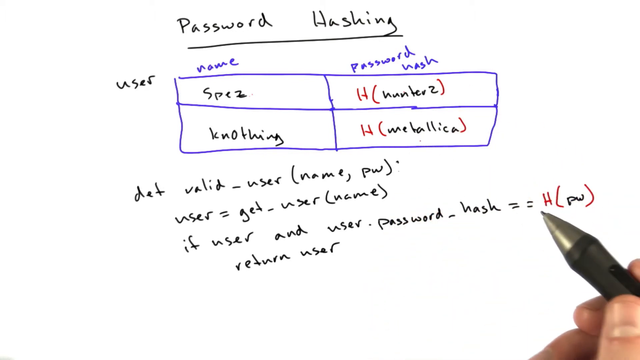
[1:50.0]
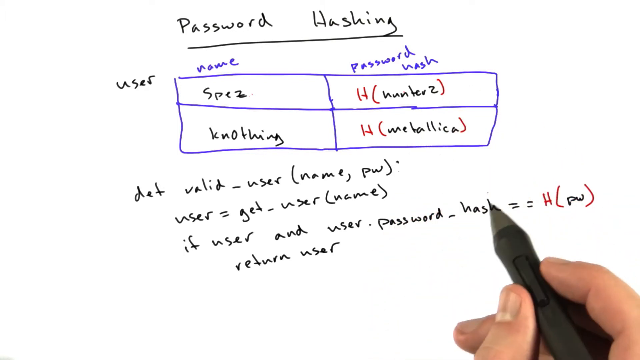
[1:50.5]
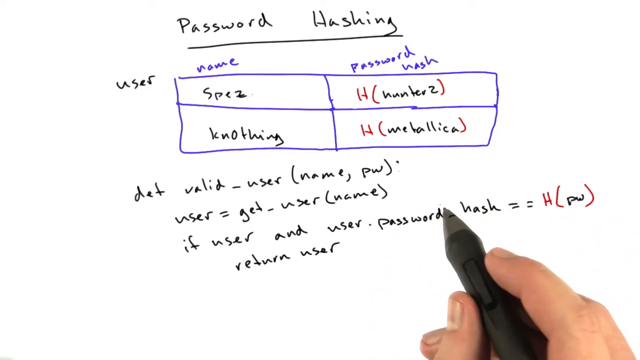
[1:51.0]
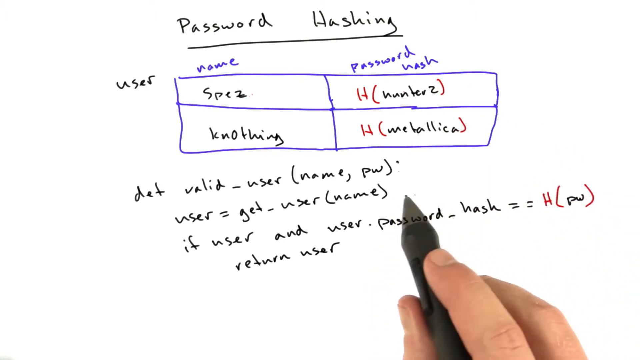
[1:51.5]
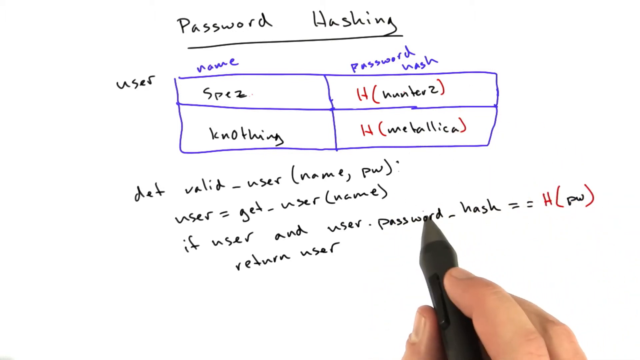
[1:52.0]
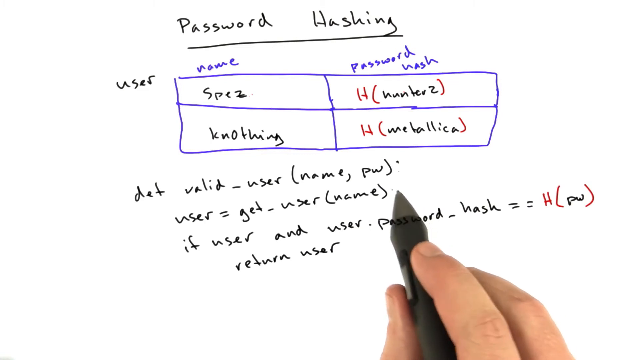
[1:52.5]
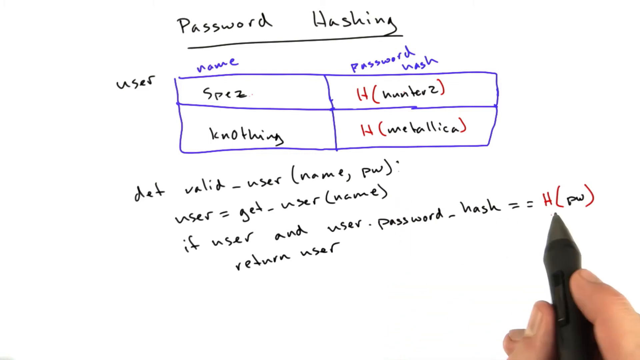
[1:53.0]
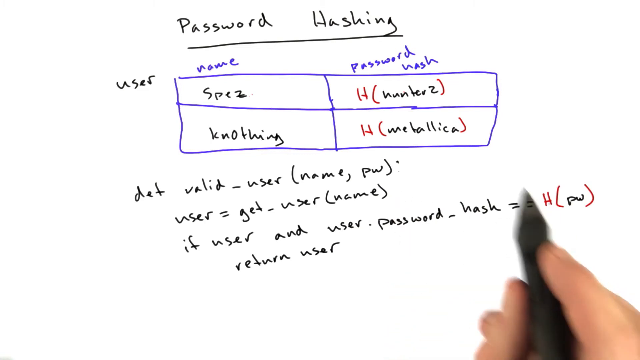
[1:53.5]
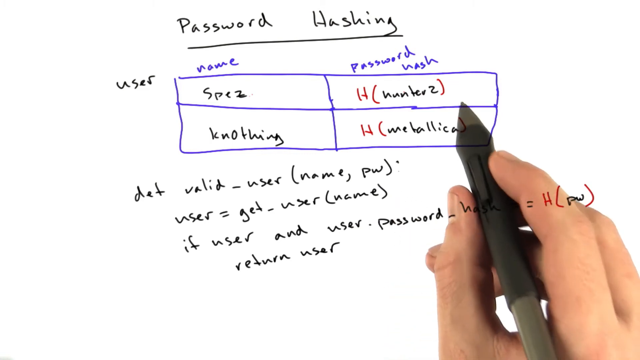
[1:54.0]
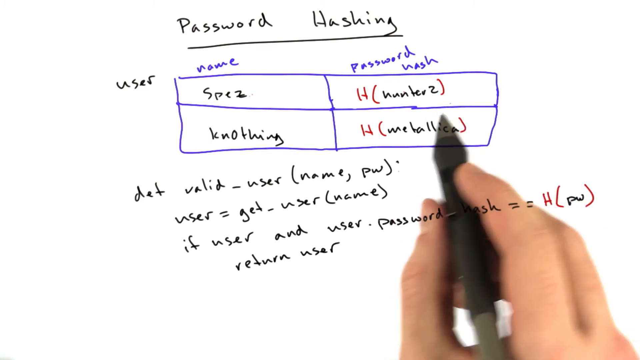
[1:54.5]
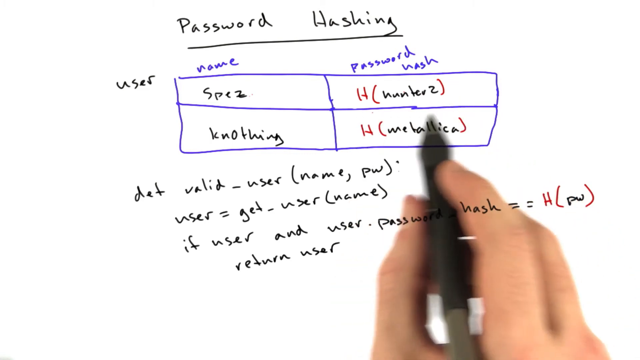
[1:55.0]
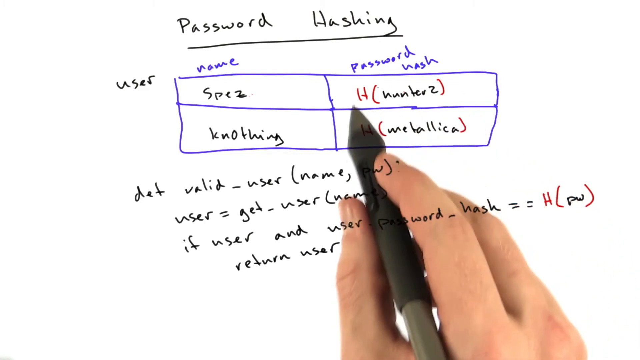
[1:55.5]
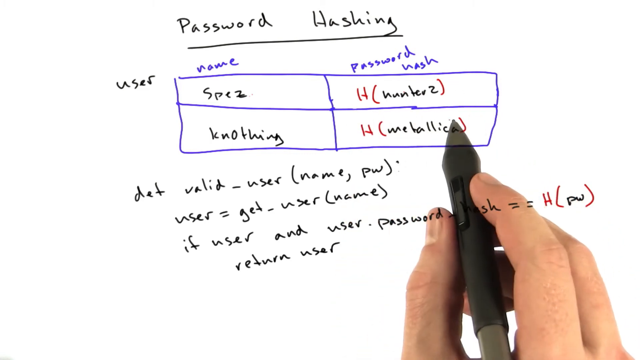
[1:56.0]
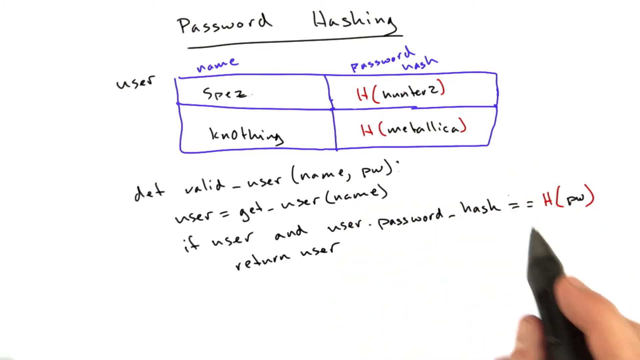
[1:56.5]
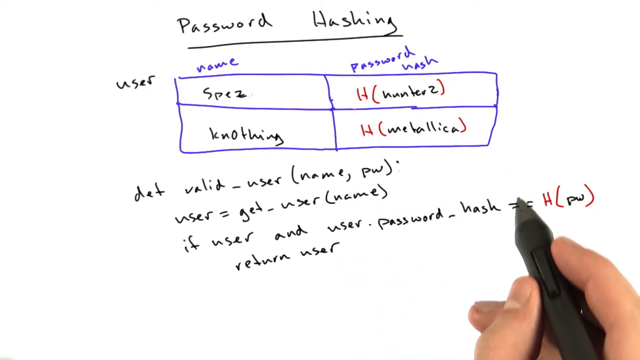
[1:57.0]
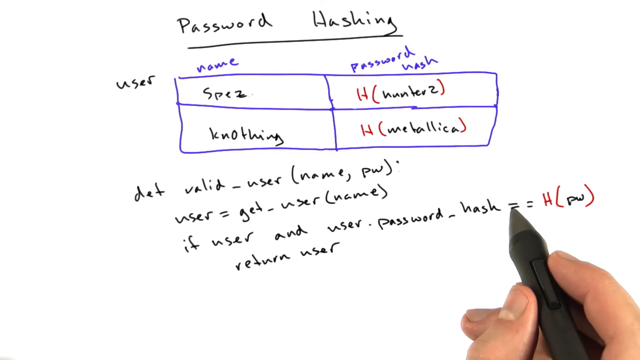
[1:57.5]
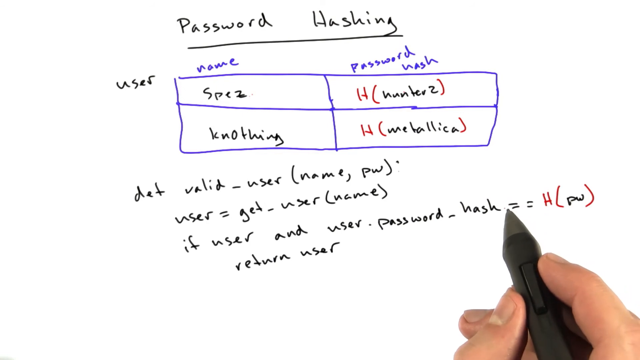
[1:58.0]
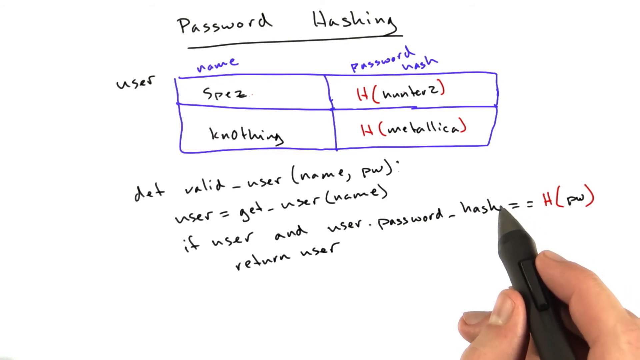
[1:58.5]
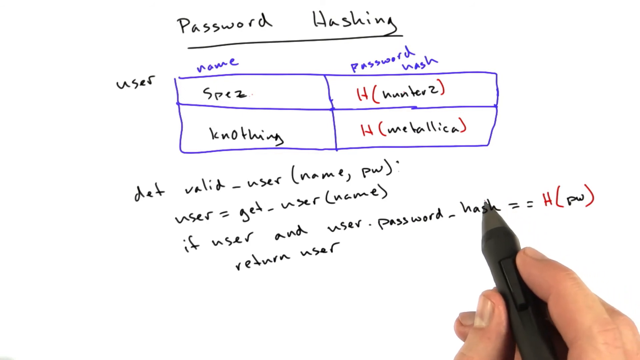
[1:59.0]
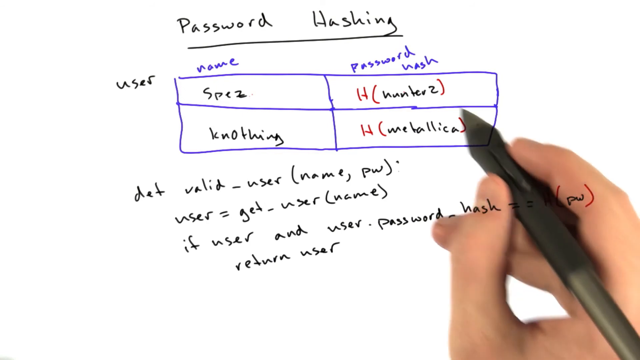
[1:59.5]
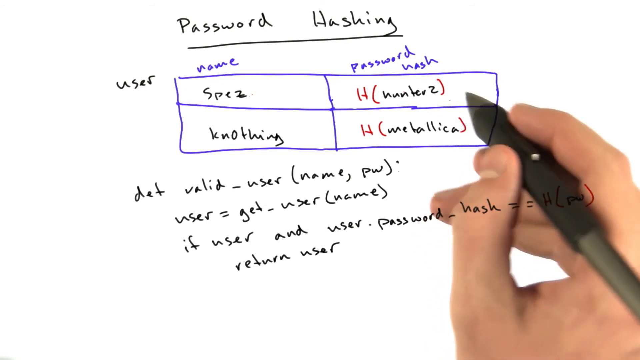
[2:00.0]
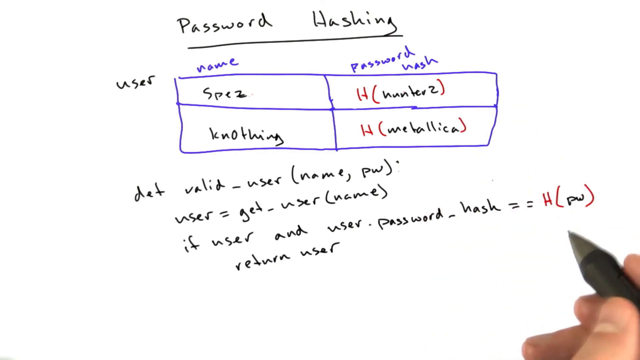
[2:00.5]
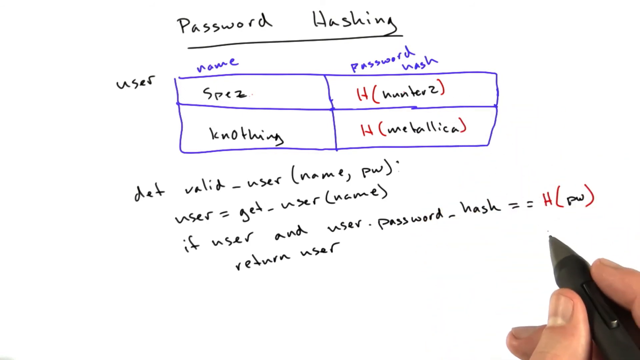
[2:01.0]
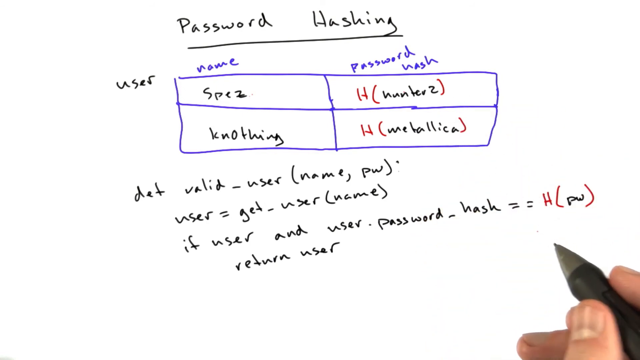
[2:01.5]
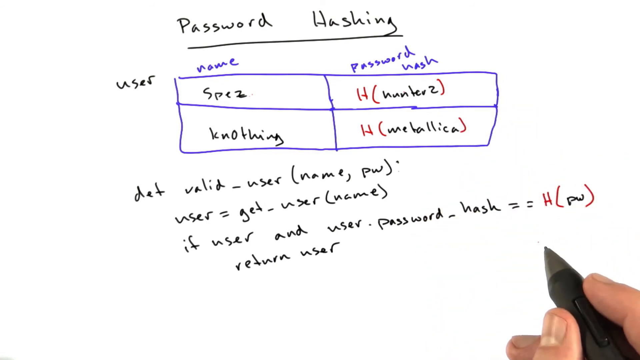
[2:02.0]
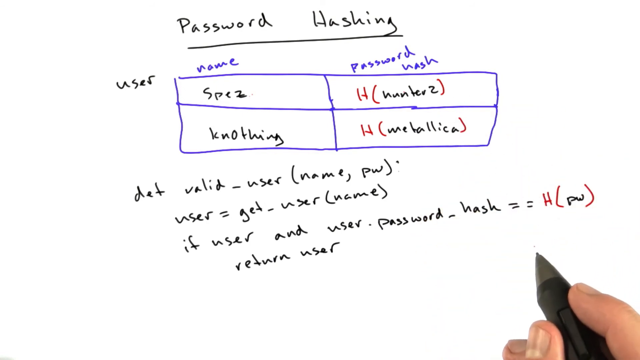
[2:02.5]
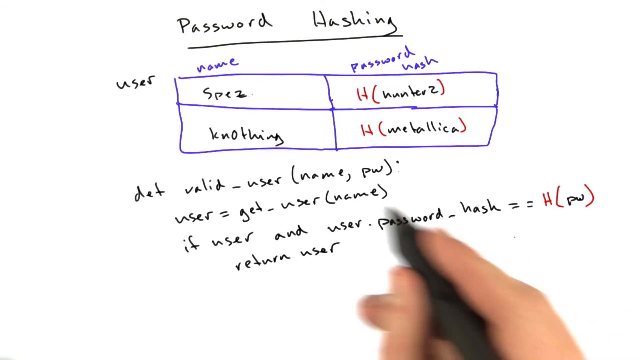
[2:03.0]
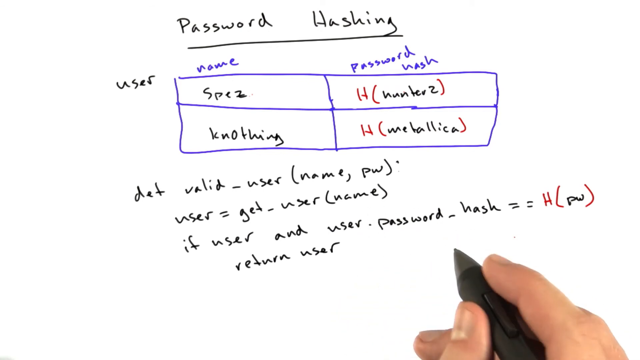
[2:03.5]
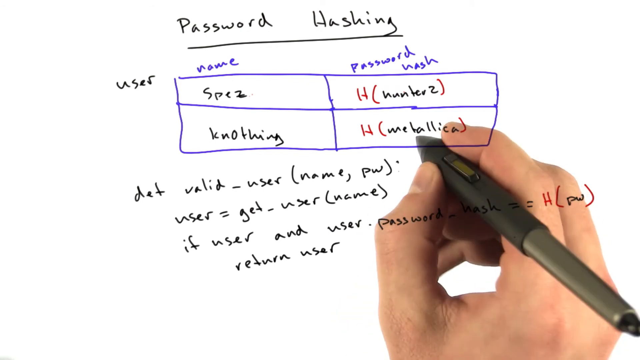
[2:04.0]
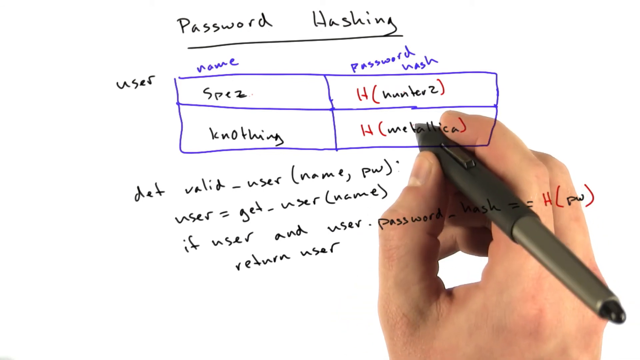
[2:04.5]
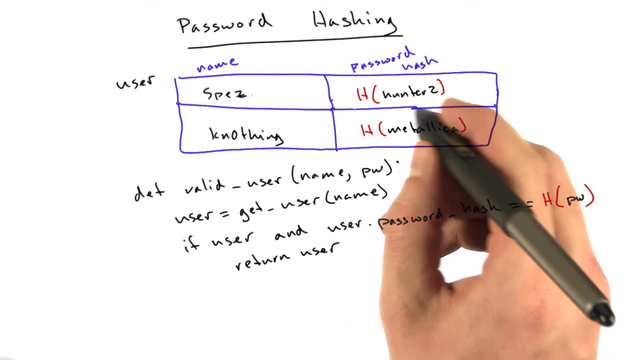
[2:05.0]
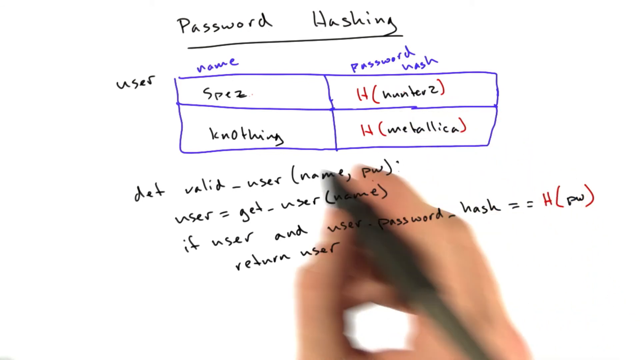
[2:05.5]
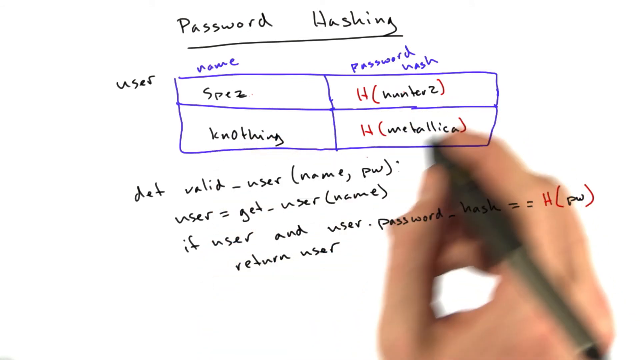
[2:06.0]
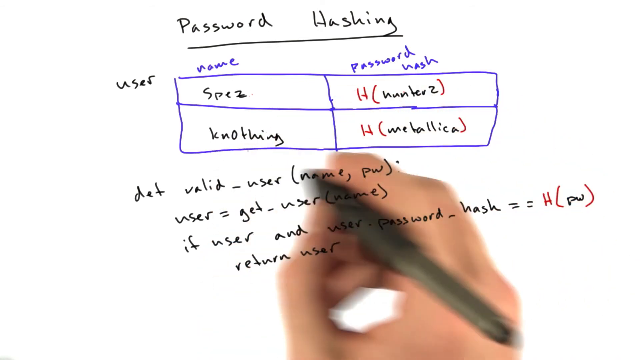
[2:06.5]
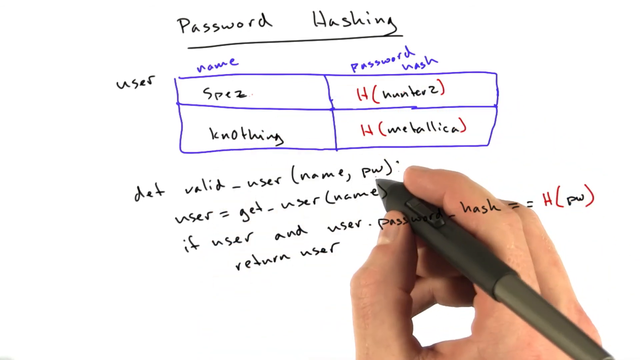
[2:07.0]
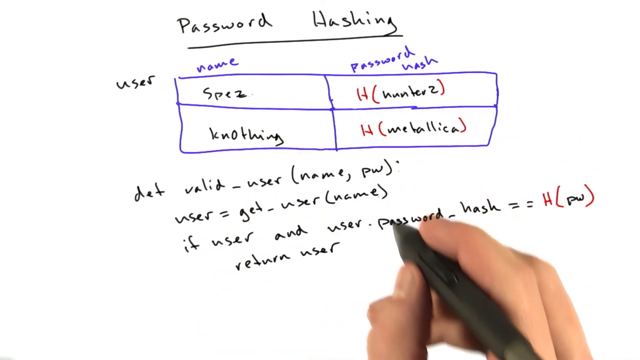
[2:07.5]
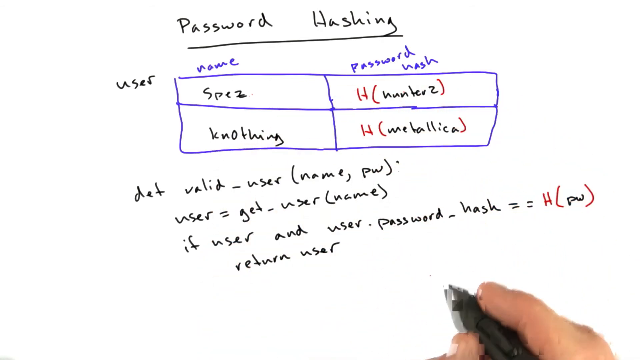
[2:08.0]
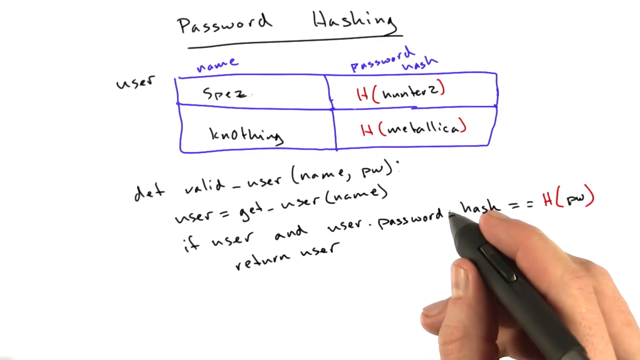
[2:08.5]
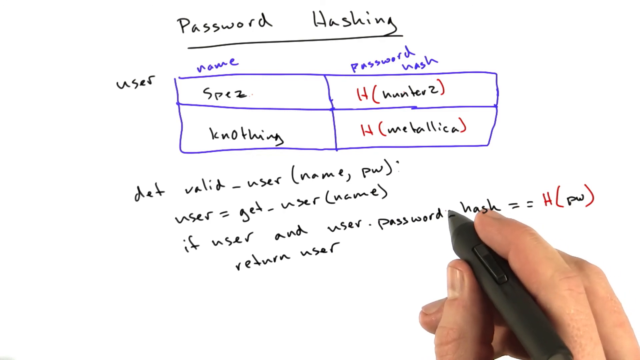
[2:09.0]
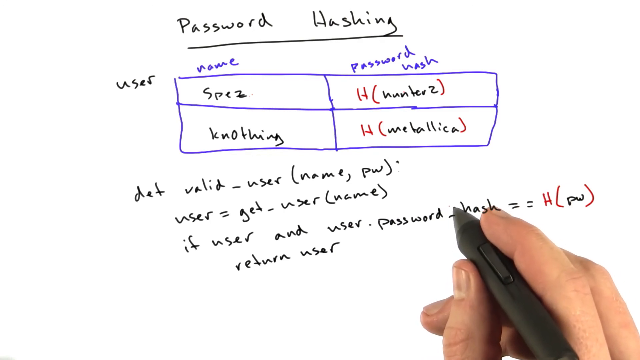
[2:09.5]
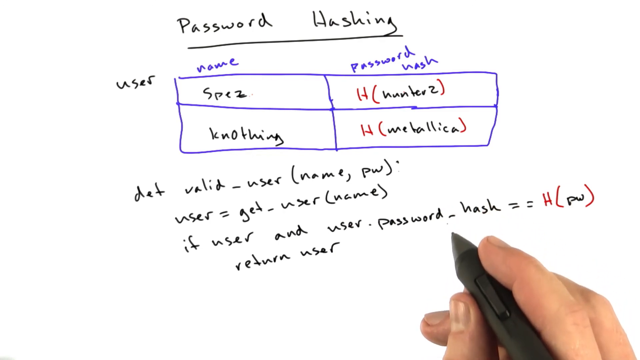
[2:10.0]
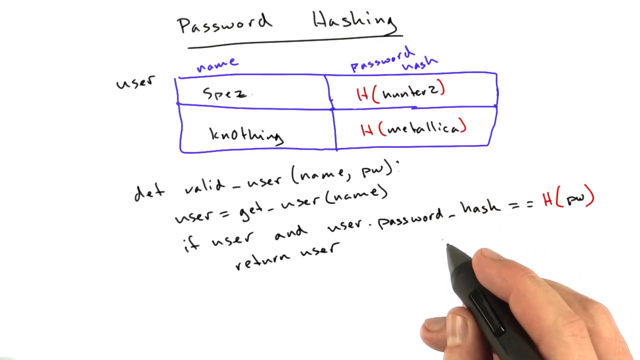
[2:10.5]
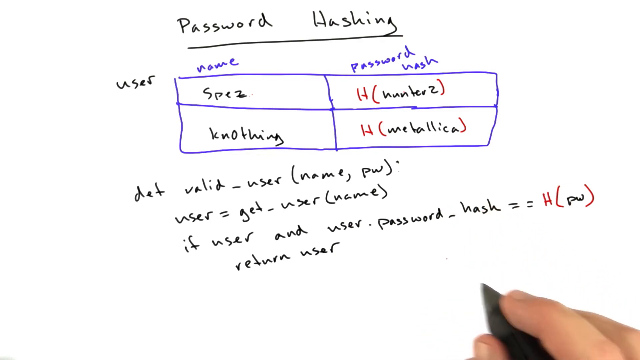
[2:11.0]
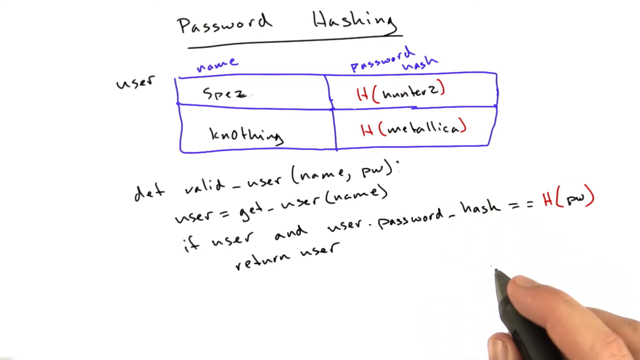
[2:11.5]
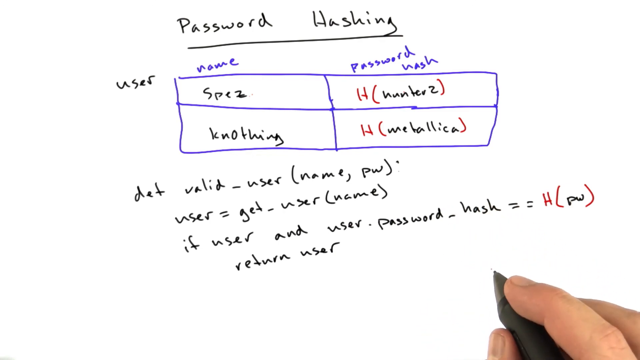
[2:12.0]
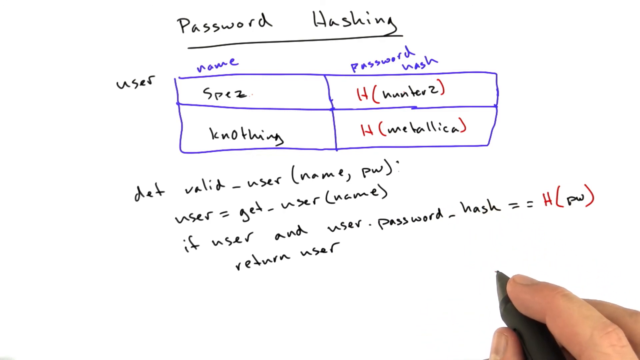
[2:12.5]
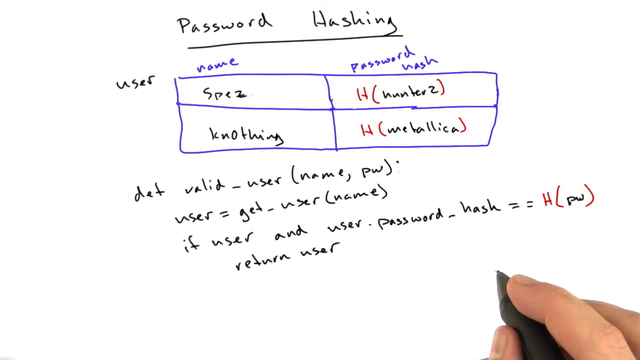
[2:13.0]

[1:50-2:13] The person spends almost the rest of the video explaining what is on the screen.